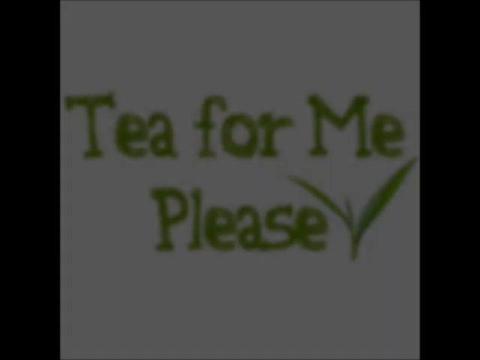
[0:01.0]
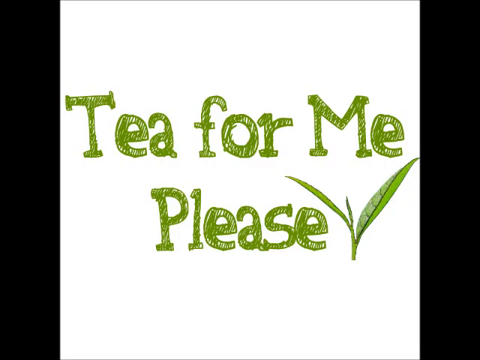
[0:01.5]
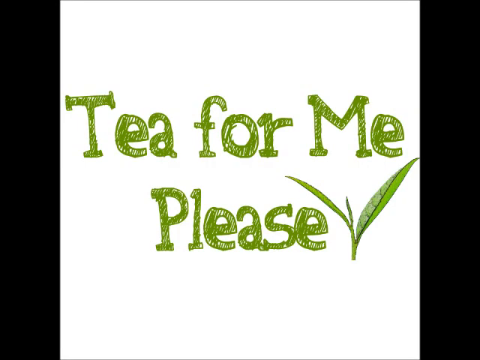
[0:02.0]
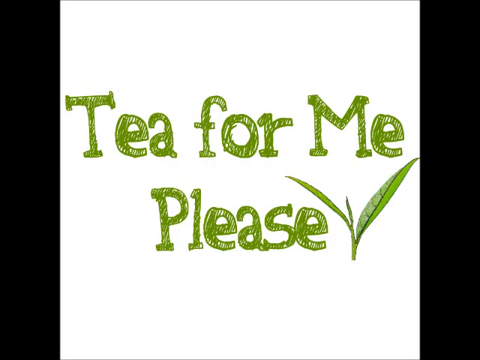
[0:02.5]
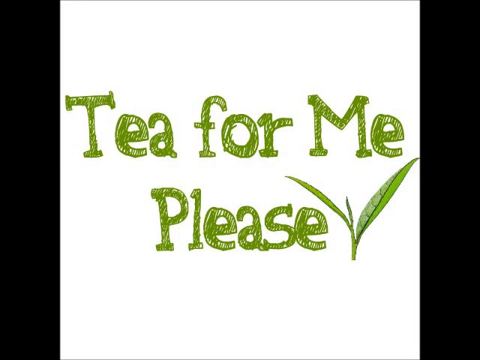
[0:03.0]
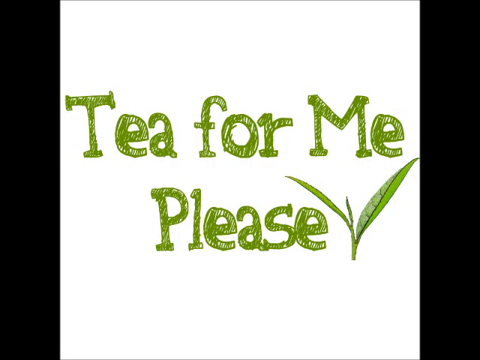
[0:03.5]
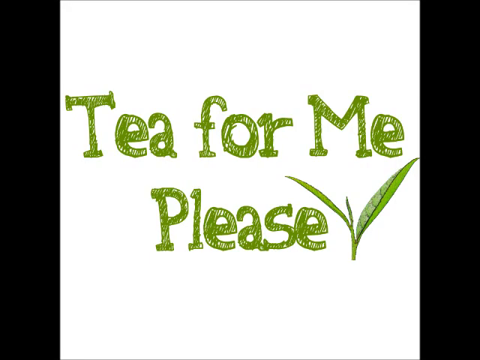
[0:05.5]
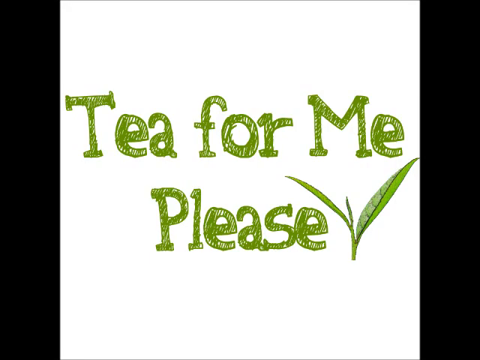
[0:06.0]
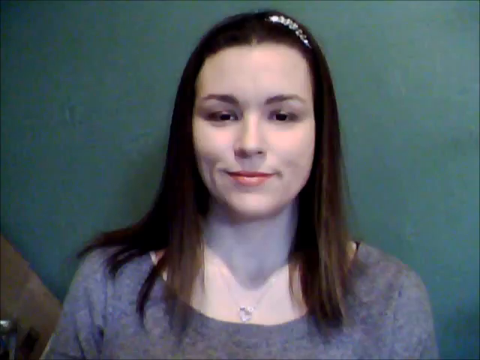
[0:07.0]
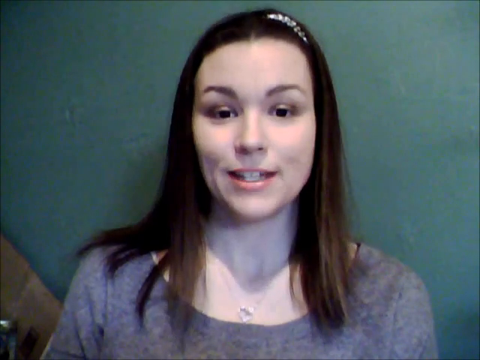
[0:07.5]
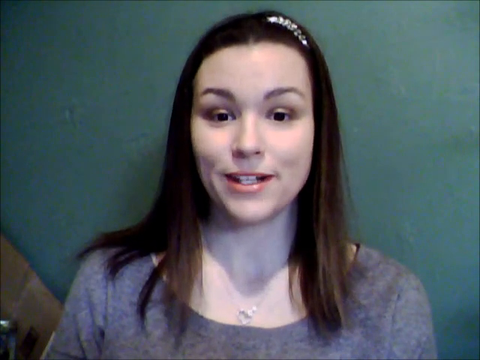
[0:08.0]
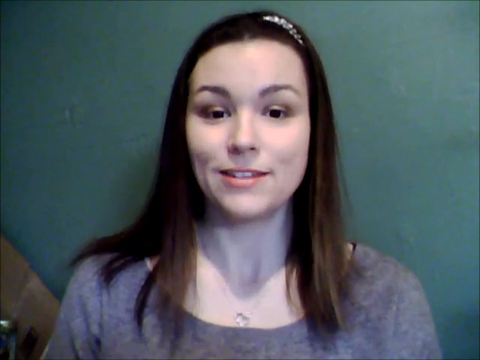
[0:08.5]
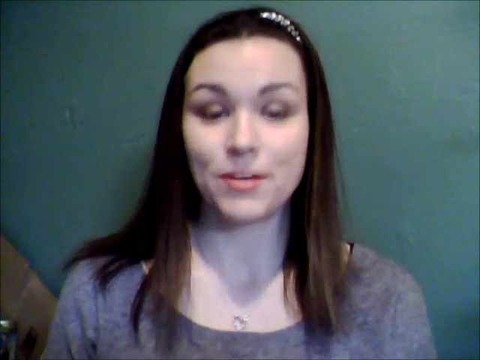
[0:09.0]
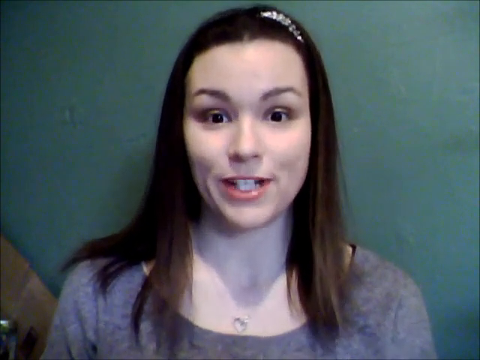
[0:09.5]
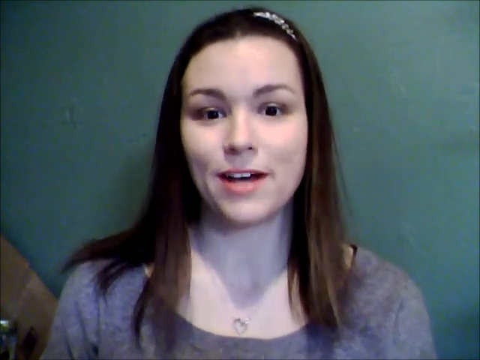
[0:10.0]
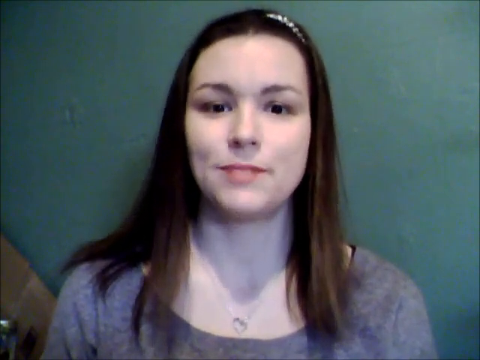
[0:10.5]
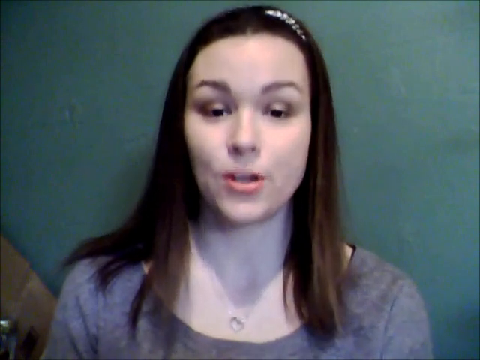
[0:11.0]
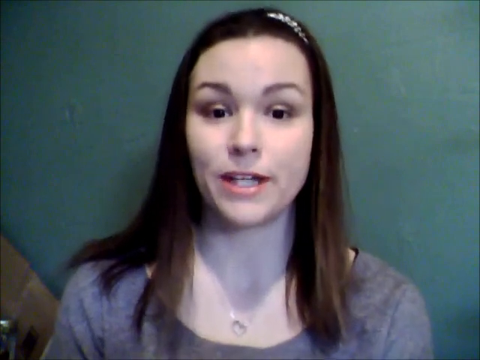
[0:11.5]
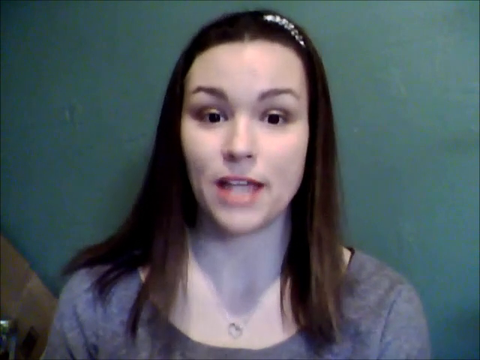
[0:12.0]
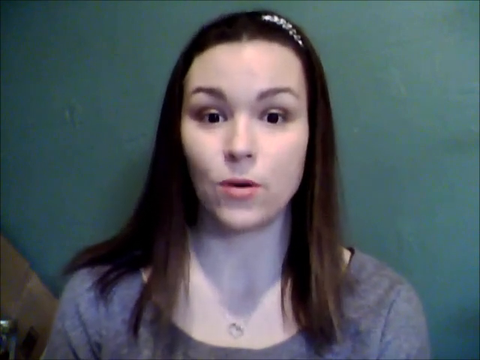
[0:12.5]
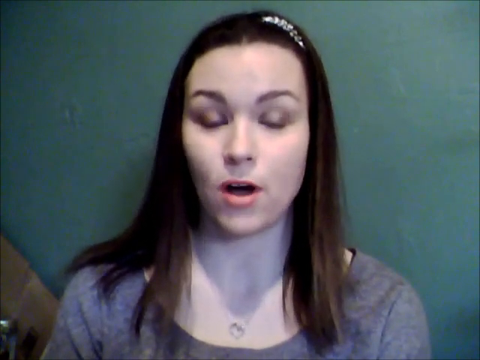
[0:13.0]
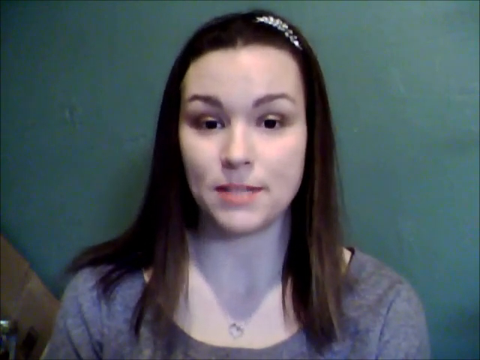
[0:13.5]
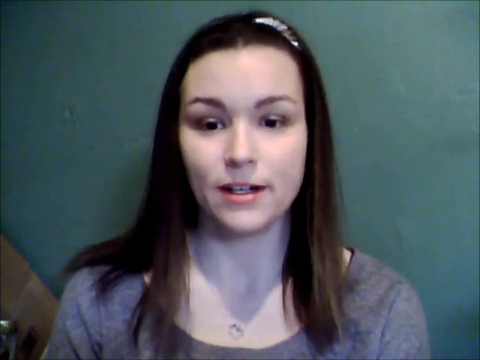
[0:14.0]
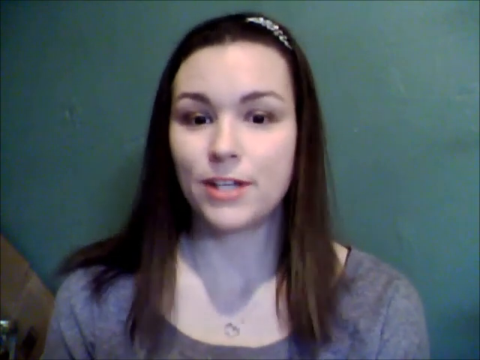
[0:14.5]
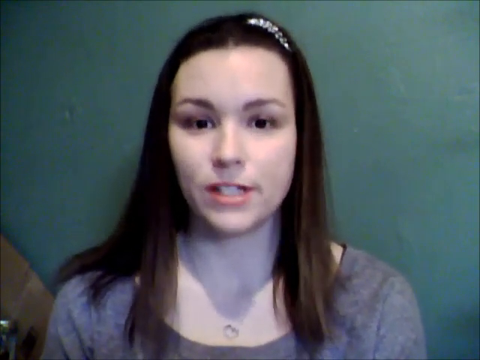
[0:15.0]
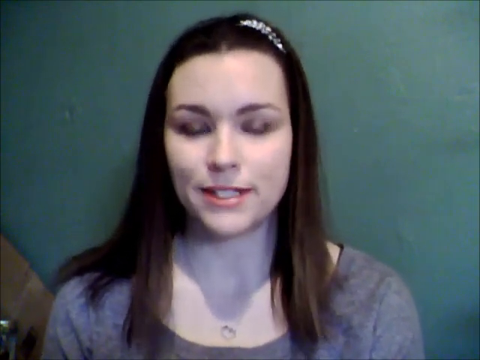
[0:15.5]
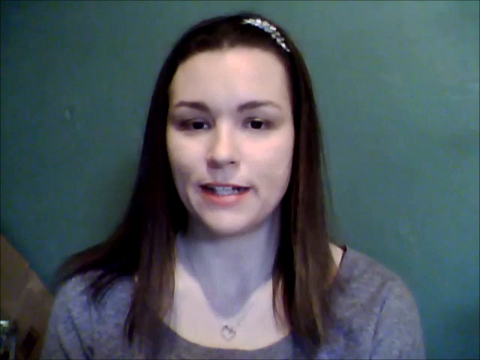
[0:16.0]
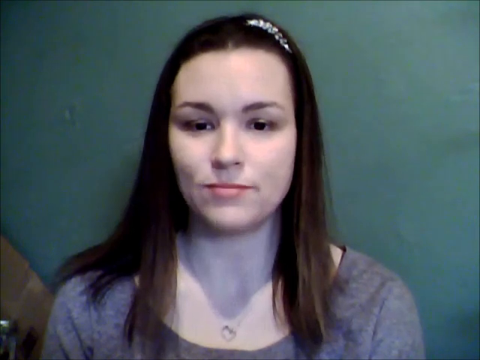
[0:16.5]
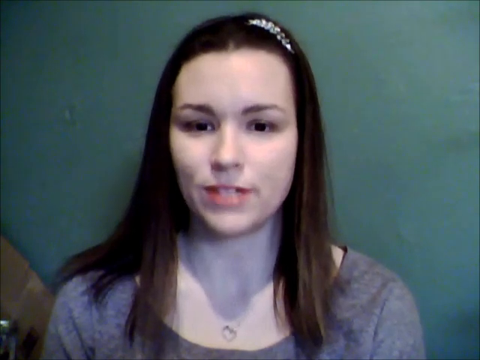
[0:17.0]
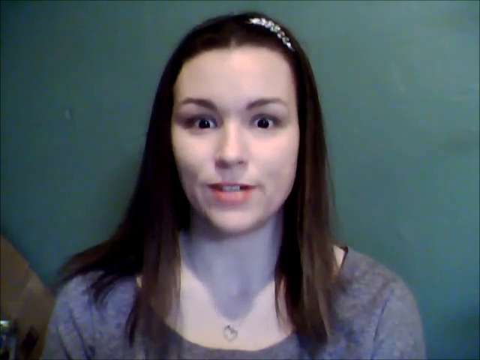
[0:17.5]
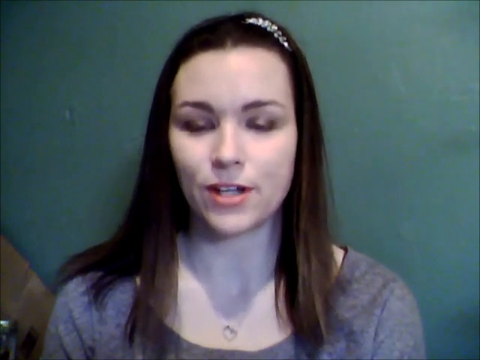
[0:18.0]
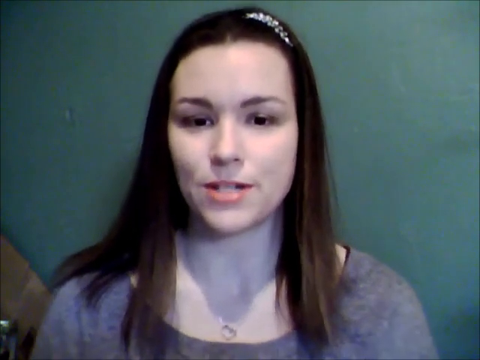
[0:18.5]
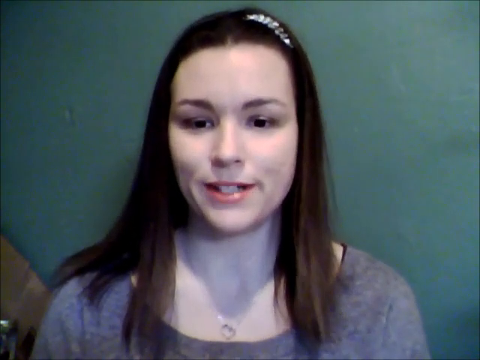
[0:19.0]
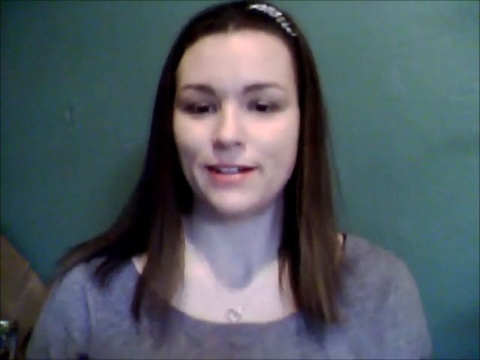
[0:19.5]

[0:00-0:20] The video opens with black bars on the left and right sides and a white background. In green lettering that almost looks like crayon, it says "T for me", and beneath that, "please", along with a plant coming up: just the stem, with one leaf going off to the left and another going up to the right. The video then goes to a woman talking in front of a teal wall. She has brown hair just past her shoulders and wears a gray shirt with what looks like a silver necklace, plus a silver beret on the right side of her hair. She wears no makeup, except maybe a little lipstick, and has brown eyes. She looks straight ahead while talking, smiling just a little, with her eyes open very wide and her eyebrows moving up and down. Her top and bottom teeth show as she talks. She shrugs her left shoulder a little, and every so often she glances down to the left, maybe reading notes. Then she looks back up, opens her eyes wide, raises her eyebrows, nods, looks back down to the left, smiles a little, and looks down to the left again.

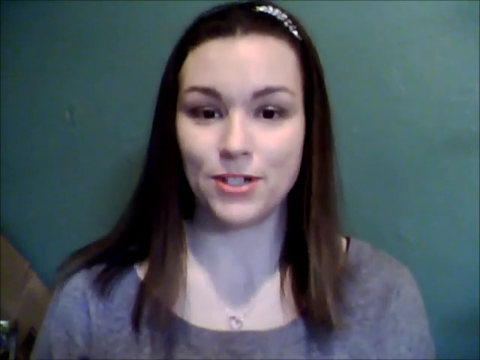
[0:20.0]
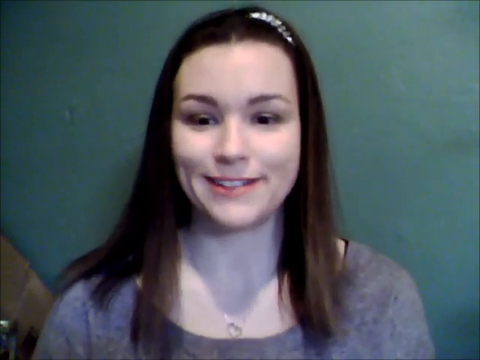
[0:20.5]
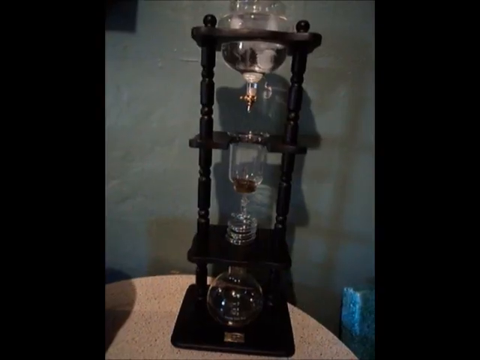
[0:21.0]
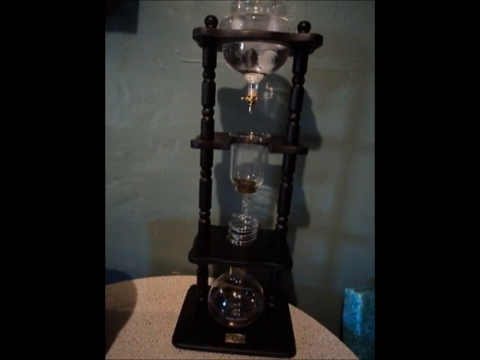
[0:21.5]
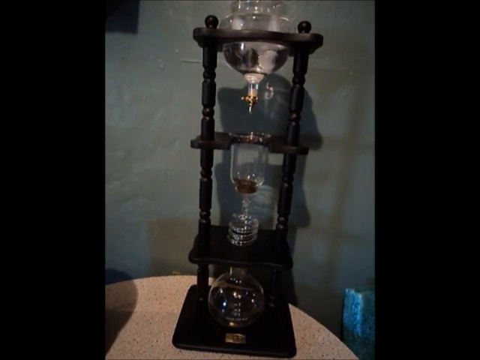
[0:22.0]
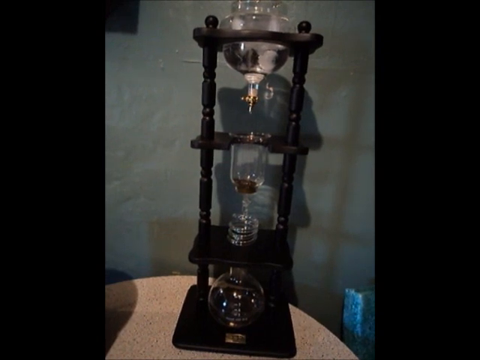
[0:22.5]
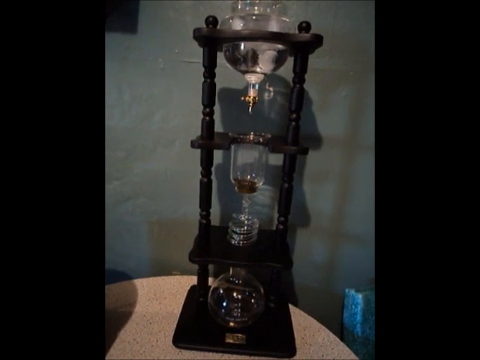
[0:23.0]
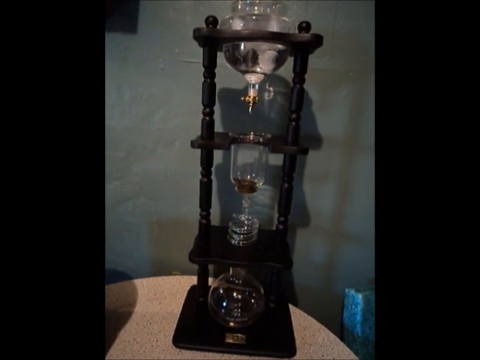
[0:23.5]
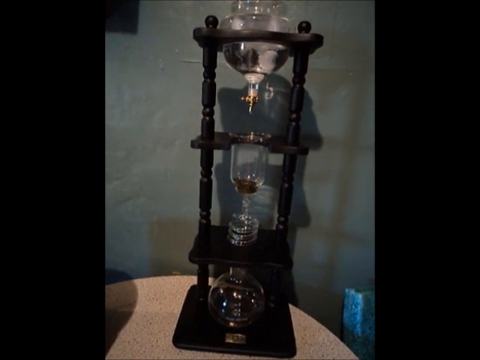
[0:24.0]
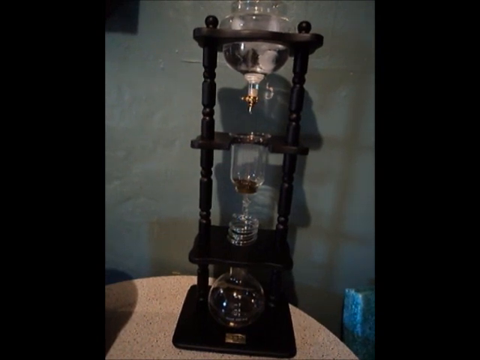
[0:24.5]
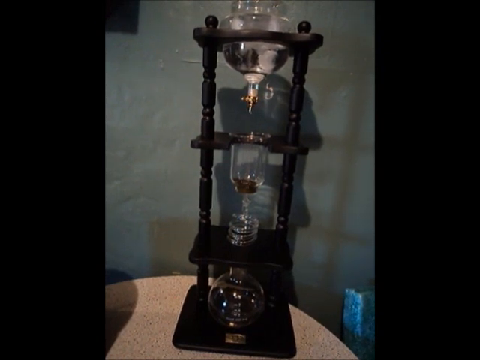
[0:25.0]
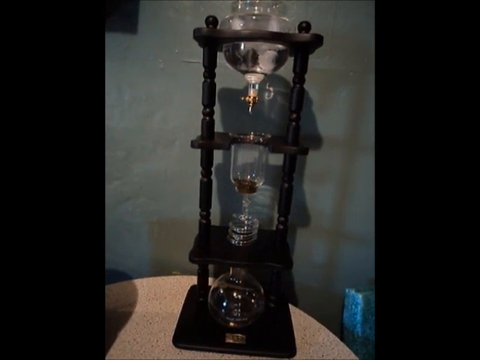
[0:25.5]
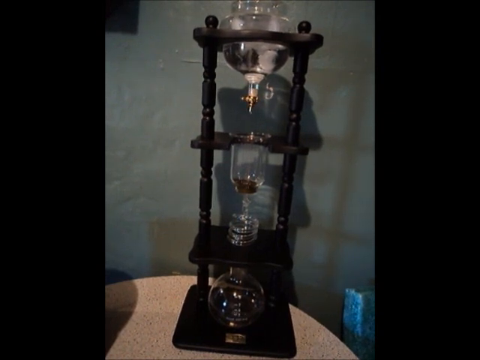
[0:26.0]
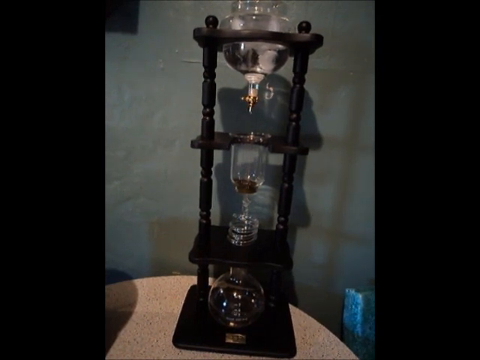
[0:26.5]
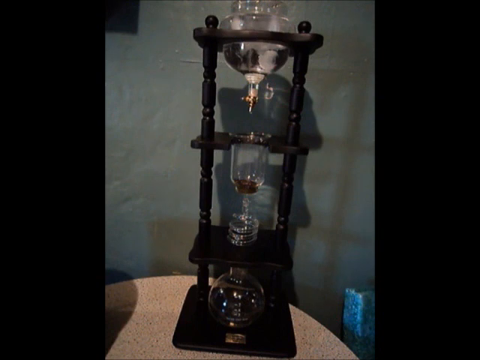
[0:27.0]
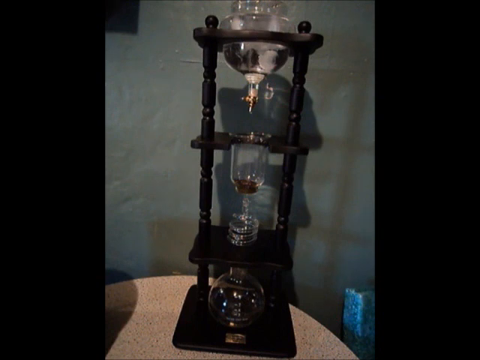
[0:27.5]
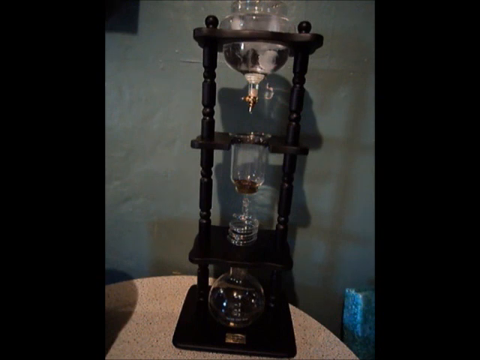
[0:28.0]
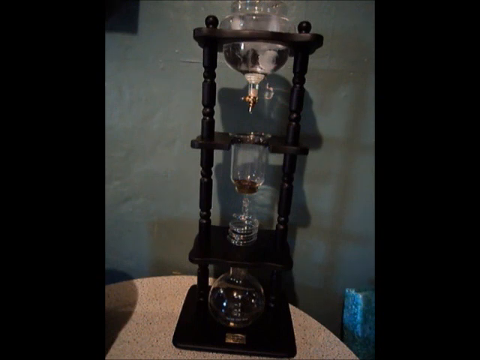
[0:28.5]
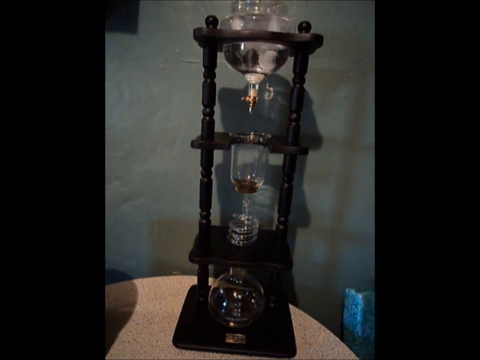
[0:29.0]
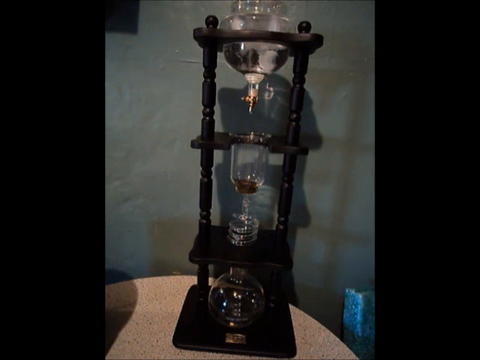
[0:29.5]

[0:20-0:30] Against a greenish wall, about half of a round wooden table shows at the bottom of the frame. On it is a dark wooden stand with bars going up the back side, divided into four sections. A ball of glass at the bottom has a top that goes up through the first and second pieces of wood. The glass then spirals up halfway, followed by a straight glass part and what is almost like an upside-down glass jar, which goes up to the third piece of wood. That piece of wood has a little opening on top that goes down into the glass. On top of it is a little nozzle pointing down, and above that a big piece of glass that almost looks like an office water cooler. On the left corner of the table is a little shadow that looks like the top of somebody's head, and a bluish book is in the bottom right corner. The setup looks like it is meant to drip liquid down through the open part at the top, down the spiral, and all the way to the bottom portion of the glass.